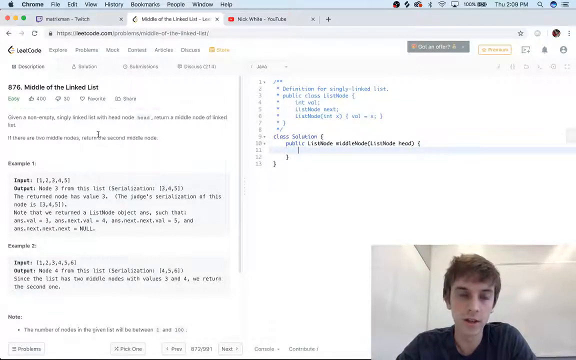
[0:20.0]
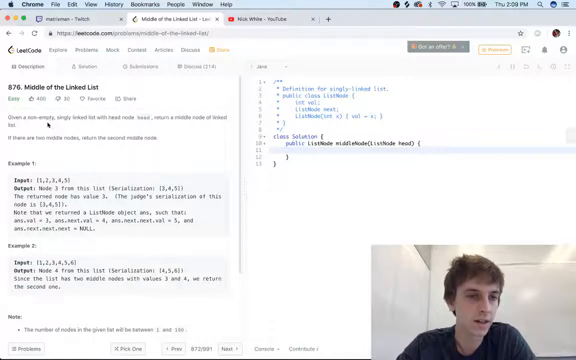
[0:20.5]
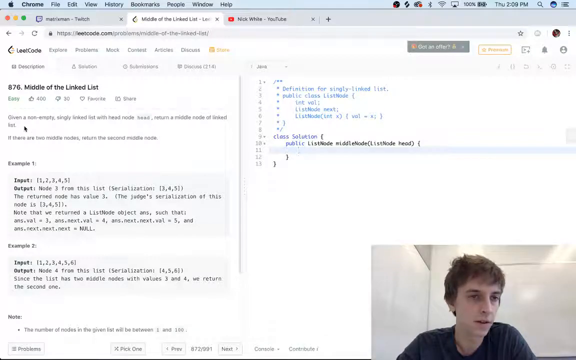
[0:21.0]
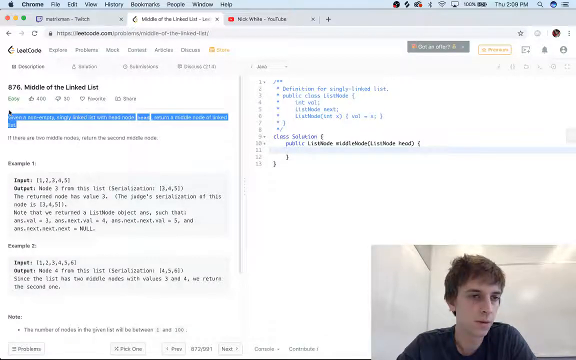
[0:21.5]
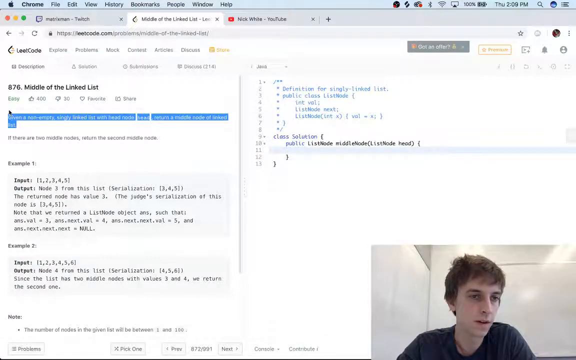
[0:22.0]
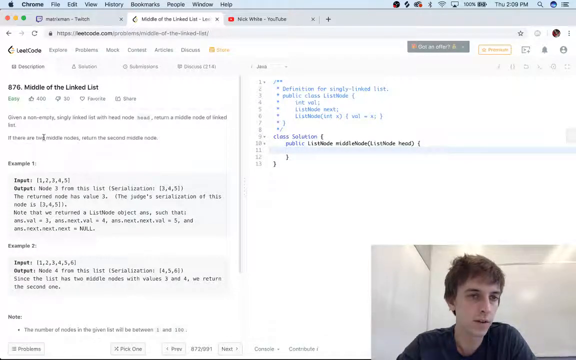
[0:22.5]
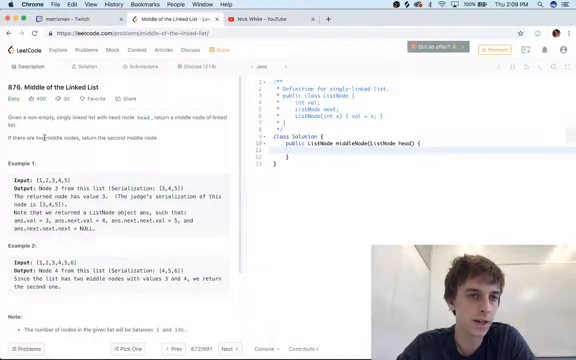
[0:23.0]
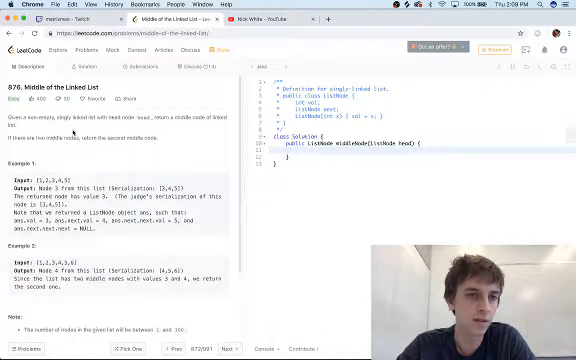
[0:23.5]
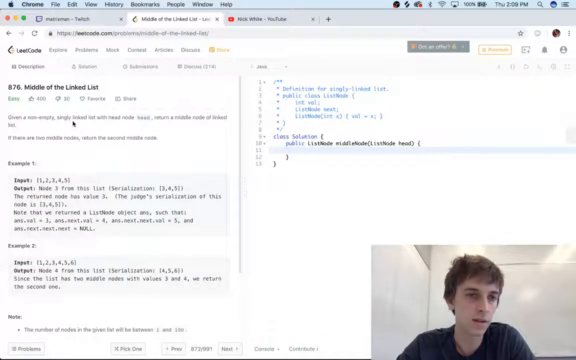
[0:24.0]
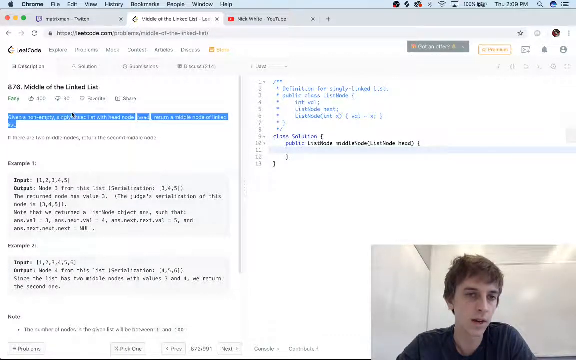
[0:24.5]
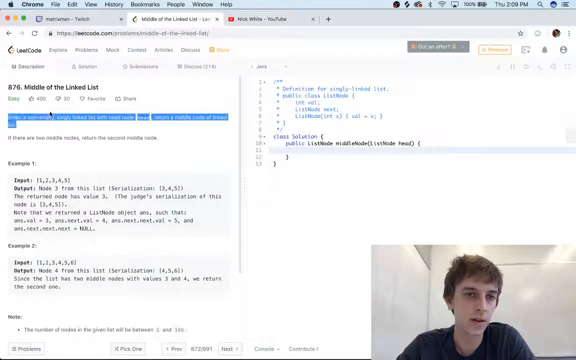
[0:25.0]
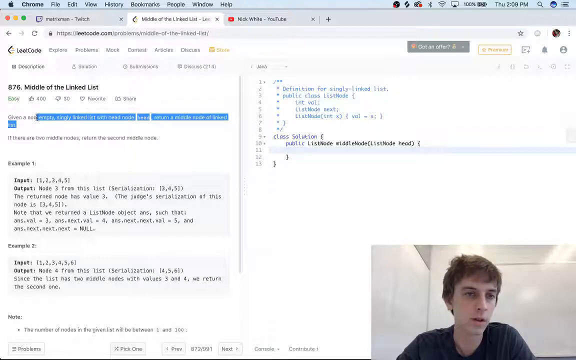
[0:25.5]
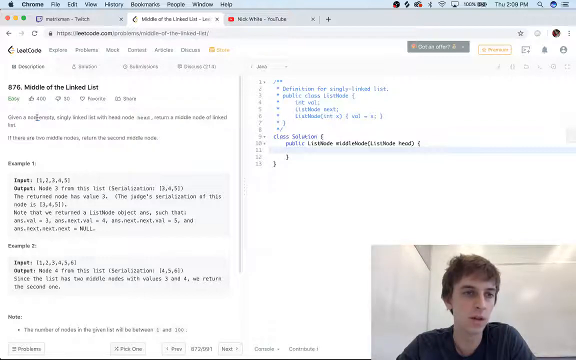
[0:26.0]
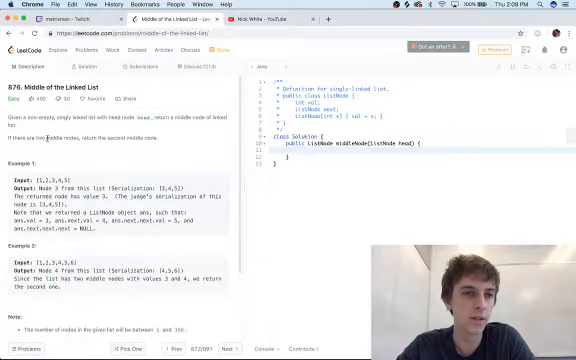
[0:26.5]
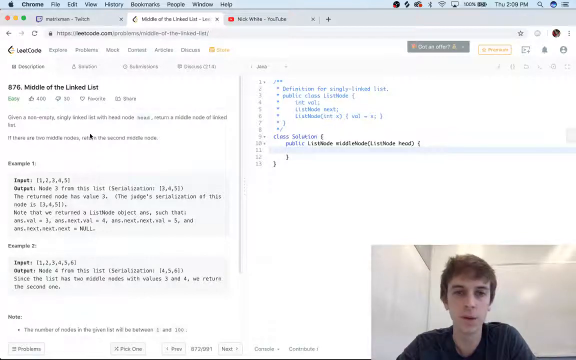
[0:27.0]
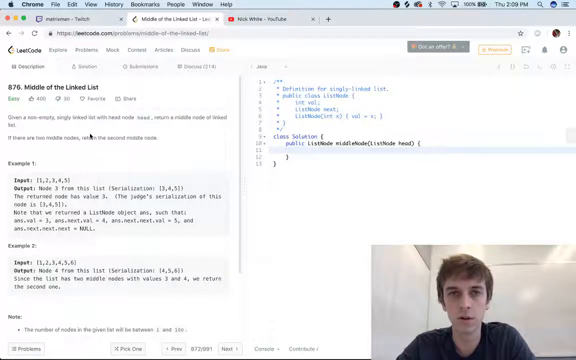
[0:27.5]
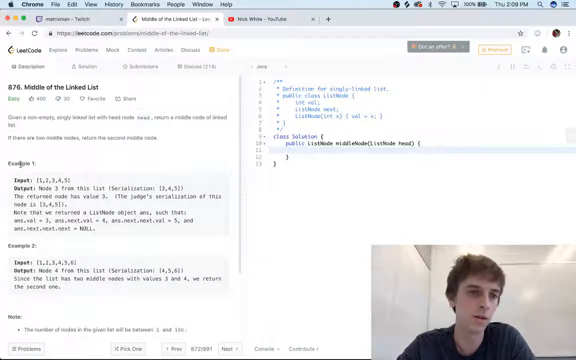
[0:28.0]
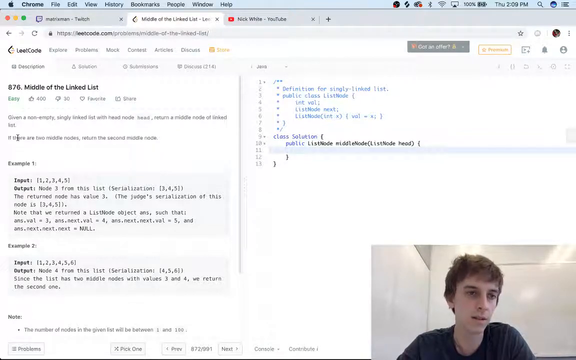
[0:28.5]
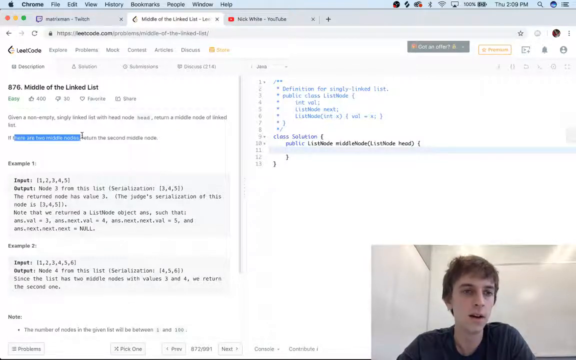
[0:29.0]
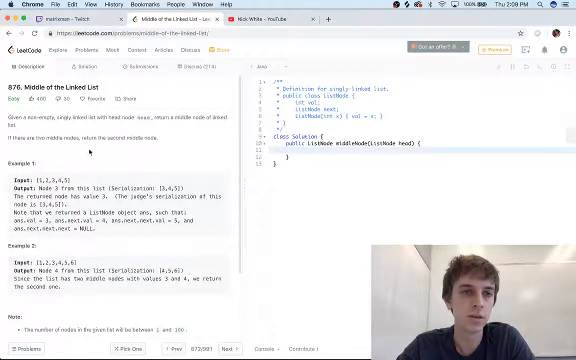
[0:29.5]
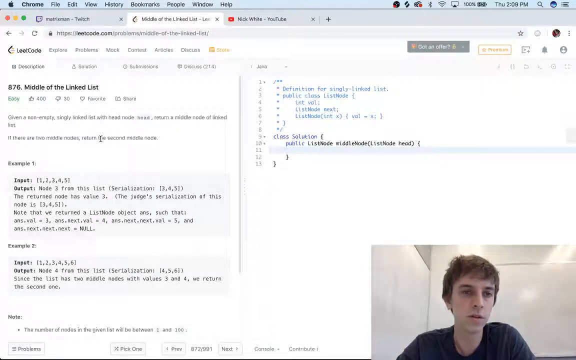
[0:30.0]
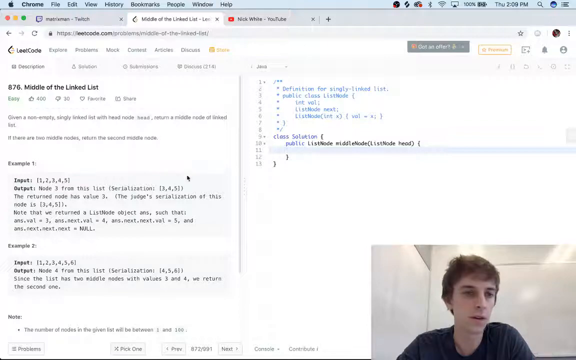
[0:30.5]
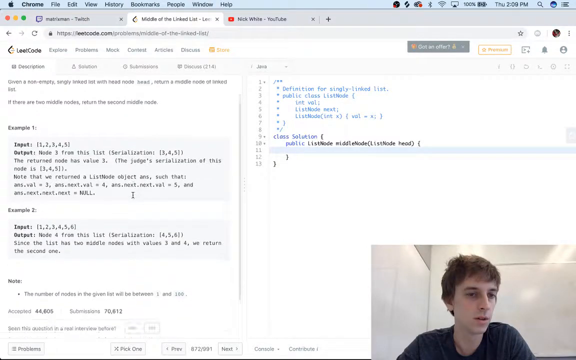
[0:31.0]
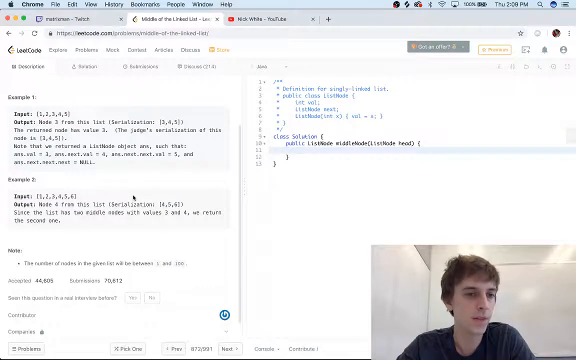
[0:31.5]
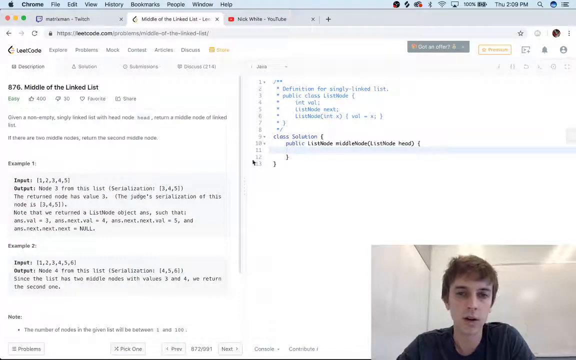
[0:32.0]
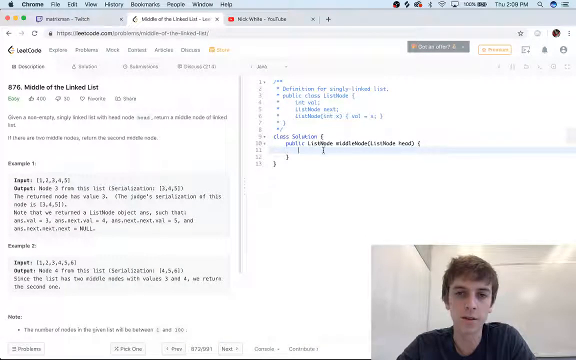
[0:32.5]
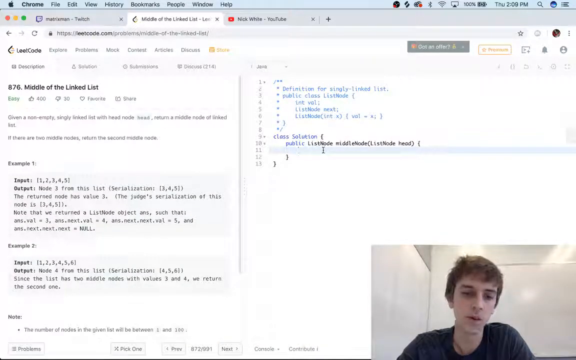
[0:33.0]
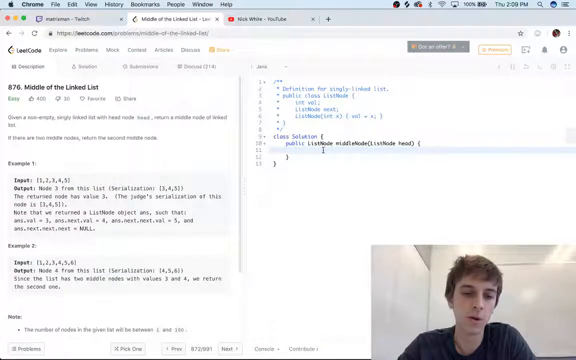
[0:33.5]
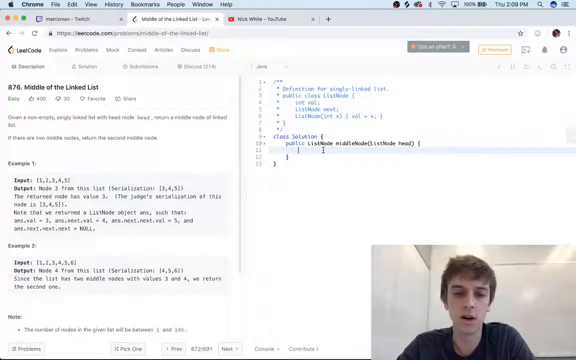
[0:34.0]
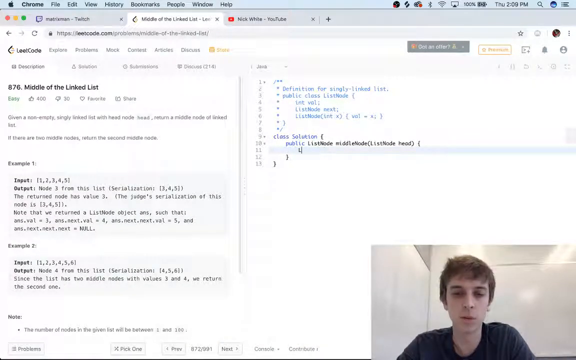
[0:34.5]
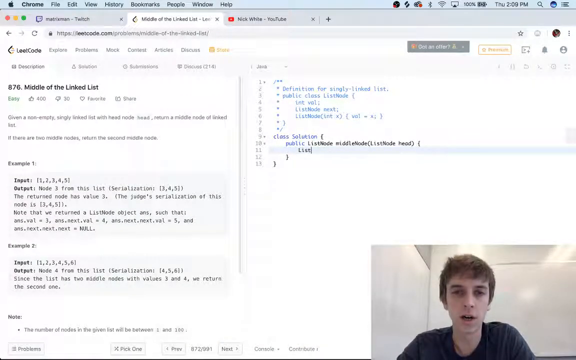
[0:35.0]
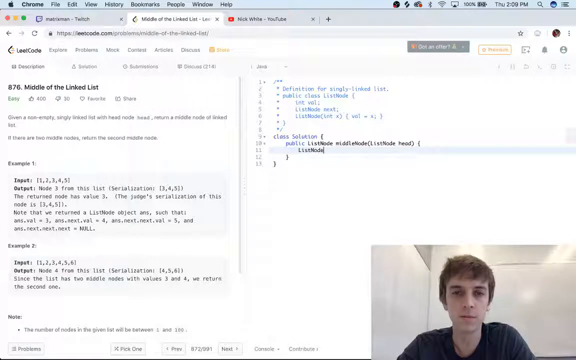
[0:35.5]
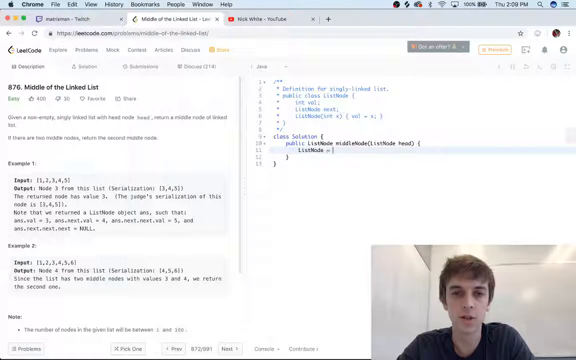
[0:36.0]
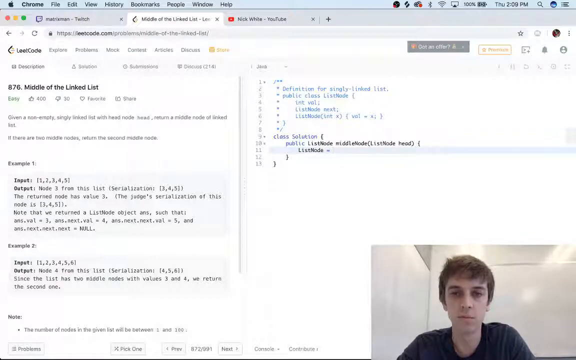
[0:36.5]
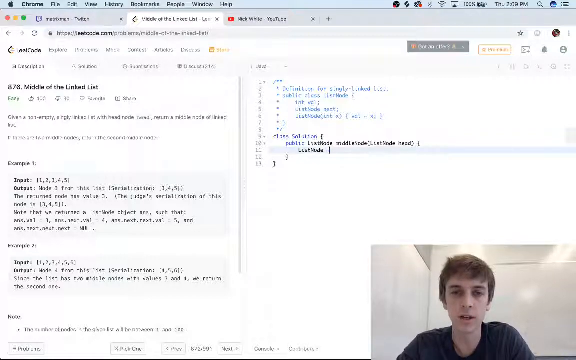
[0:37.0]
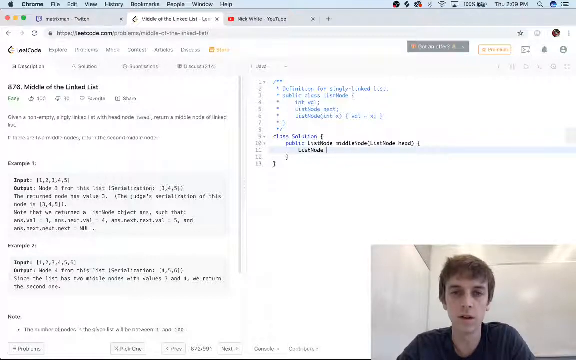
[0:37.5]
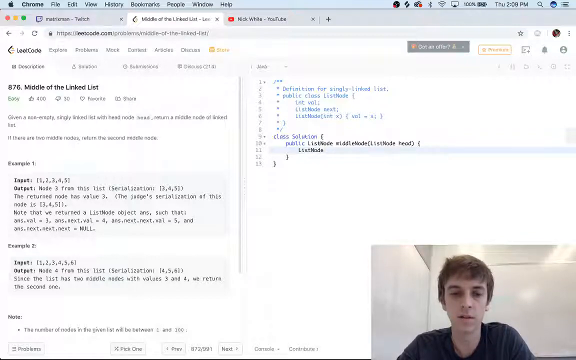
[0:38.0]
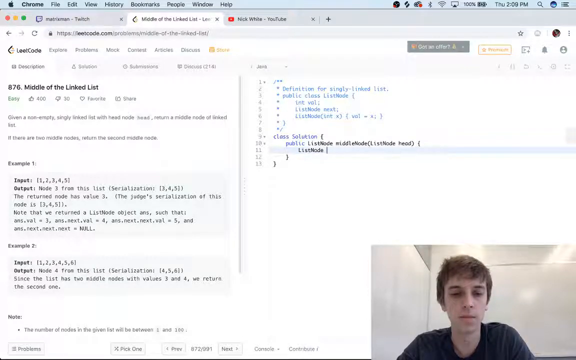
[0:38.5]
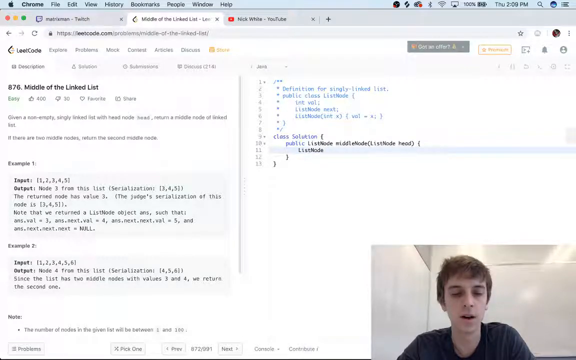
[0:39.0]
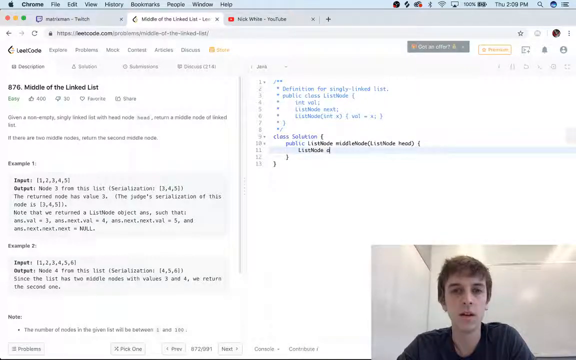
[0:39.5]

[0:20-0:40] The speaker focuses on the screen and highlights a segment on the page that reads "given a non-empty singly linked list with head node"; the rest of the text is unreadable due to the video quality. He highlights the same segment a few times for emphasis, then highlights the next sentence, which reads "if there are two middle nodes, return the second middle node." He scrolls down a little, showing additional examples, then goes over to his coding screen, where he types "list node", a zero, an O, and an underscore. He is mostly focused on what he is doing, occasionally making eye contact with the camera. The highlighted sentences are the first two sentences on the page marked 876, "middle of the linked list", on the website LeetCode.